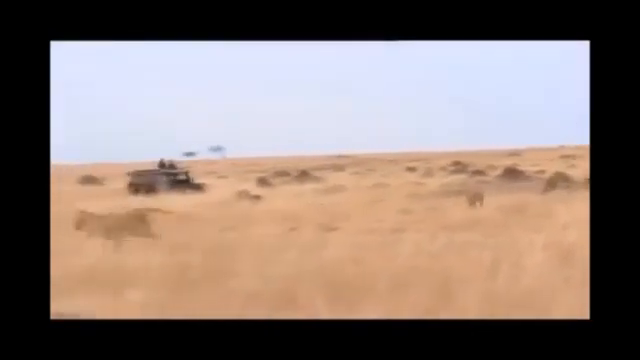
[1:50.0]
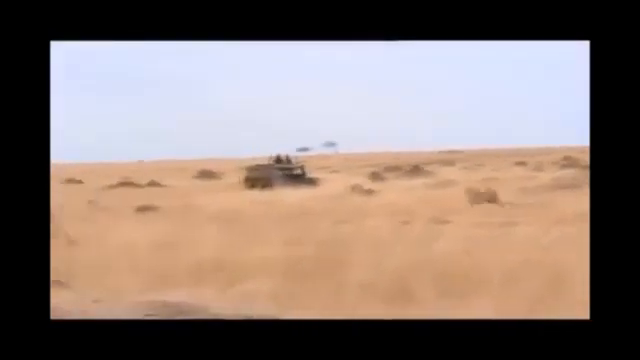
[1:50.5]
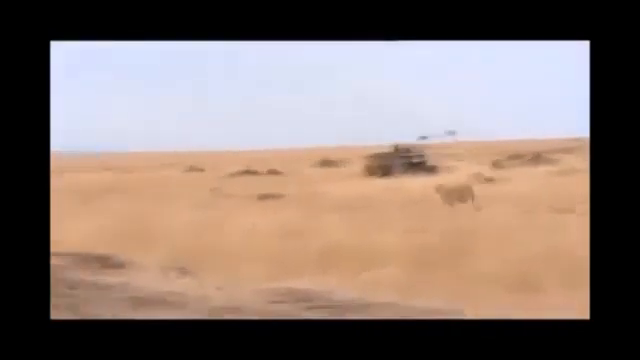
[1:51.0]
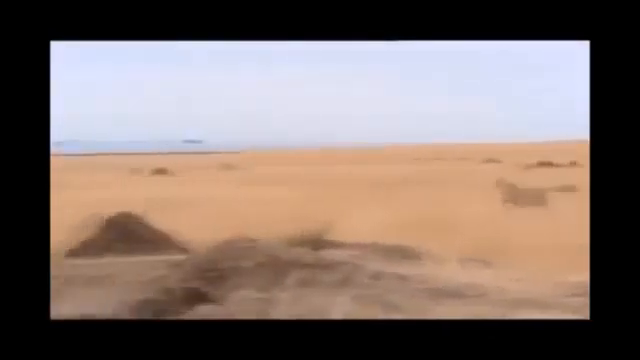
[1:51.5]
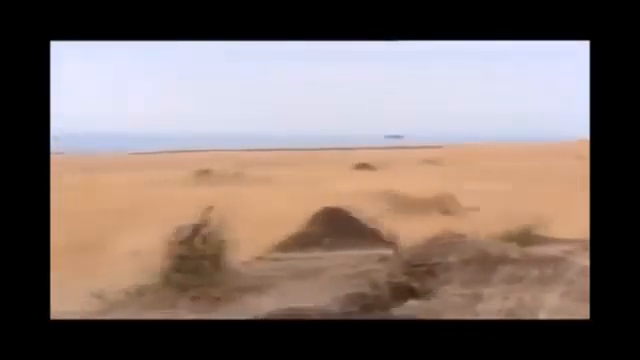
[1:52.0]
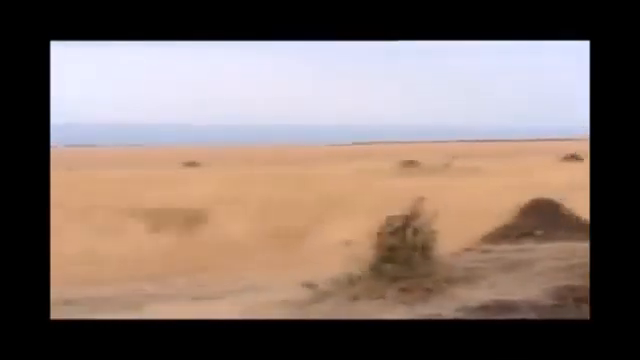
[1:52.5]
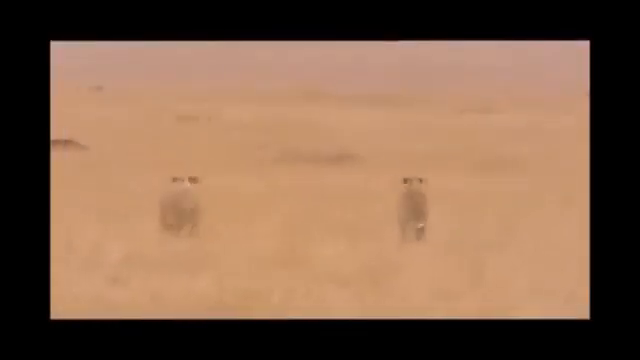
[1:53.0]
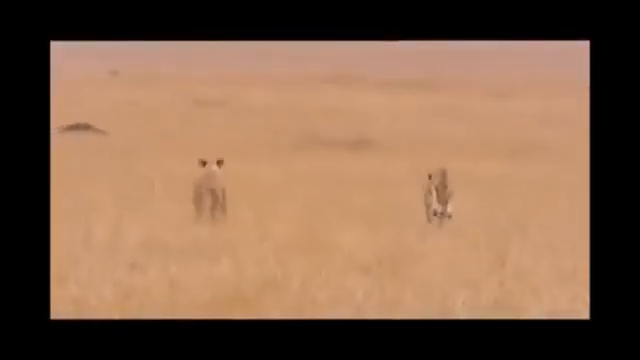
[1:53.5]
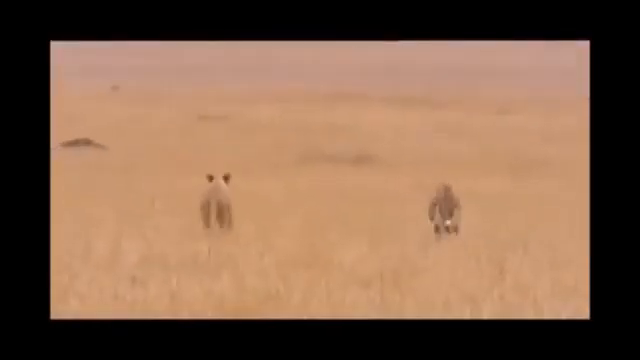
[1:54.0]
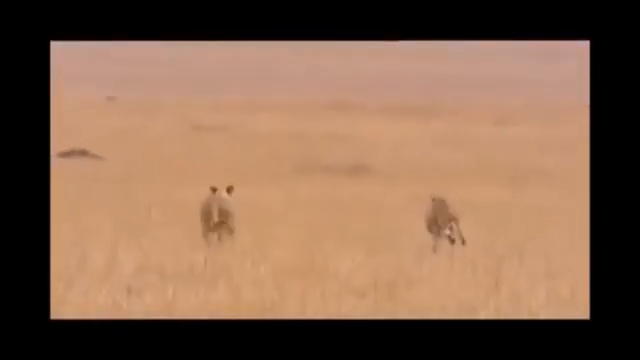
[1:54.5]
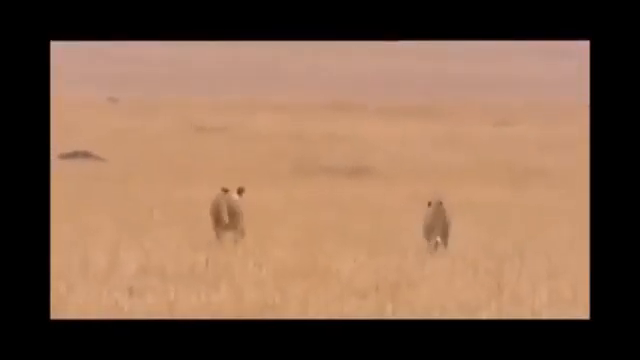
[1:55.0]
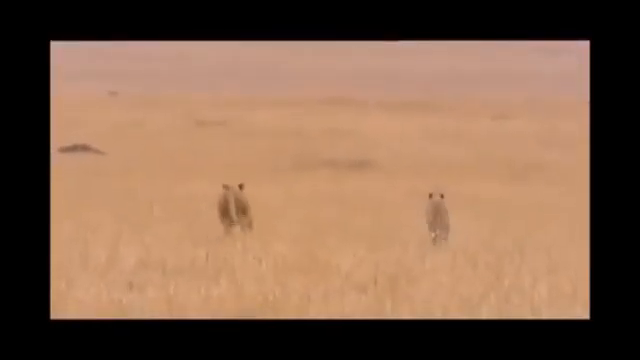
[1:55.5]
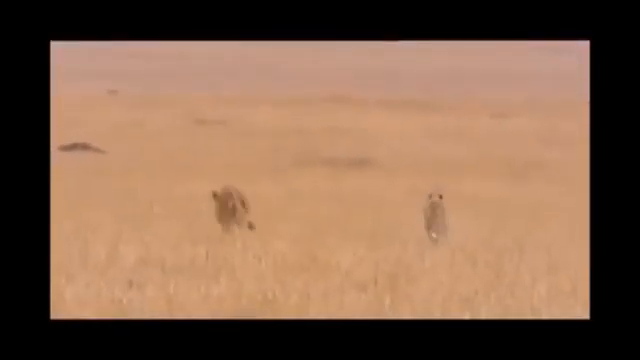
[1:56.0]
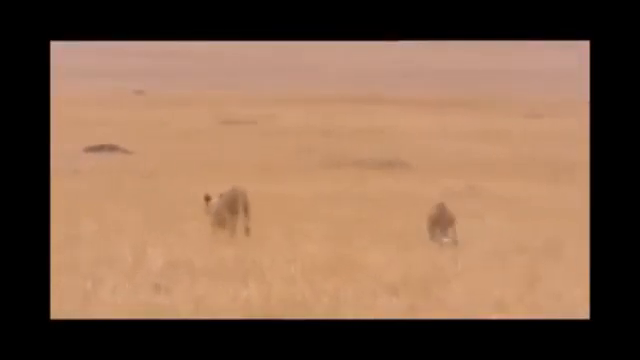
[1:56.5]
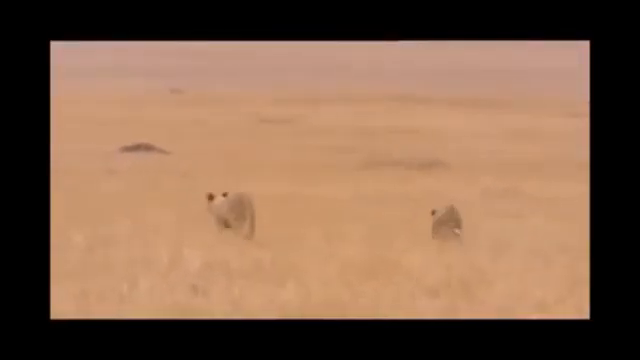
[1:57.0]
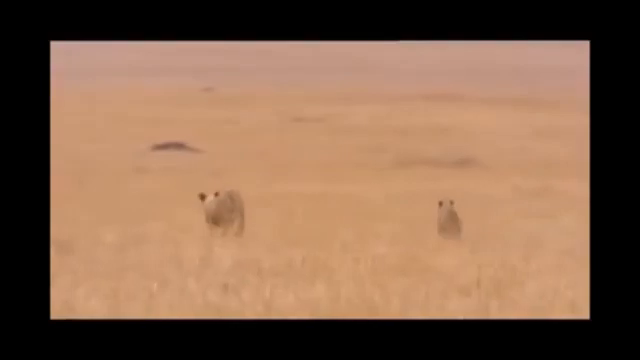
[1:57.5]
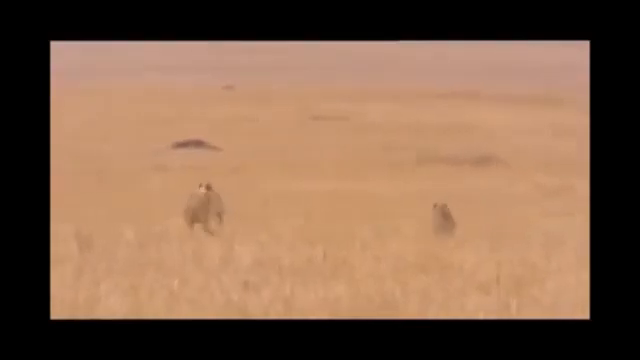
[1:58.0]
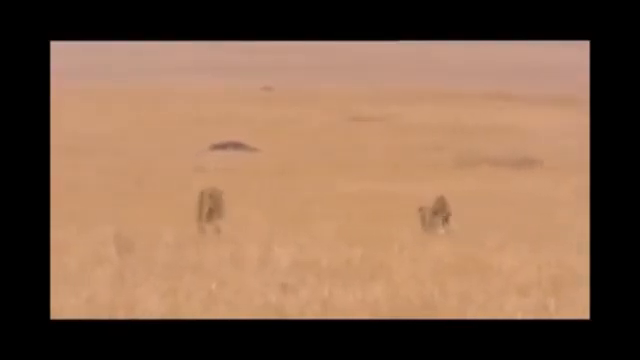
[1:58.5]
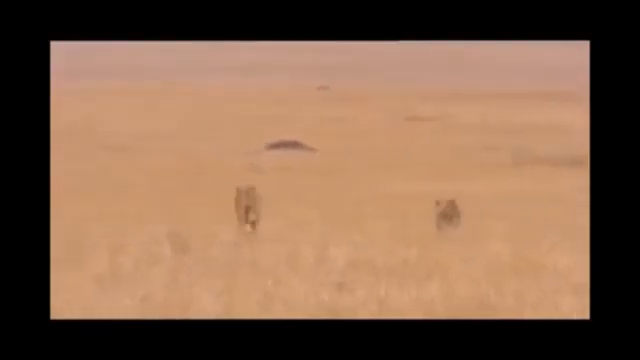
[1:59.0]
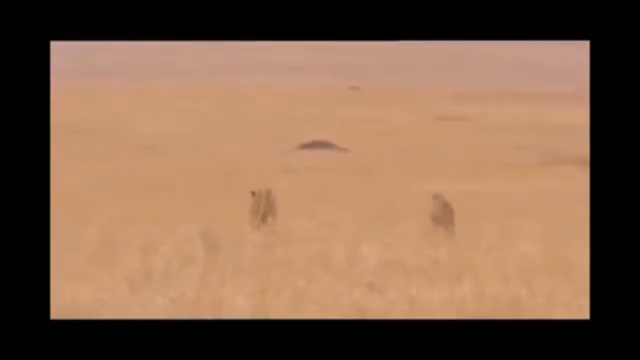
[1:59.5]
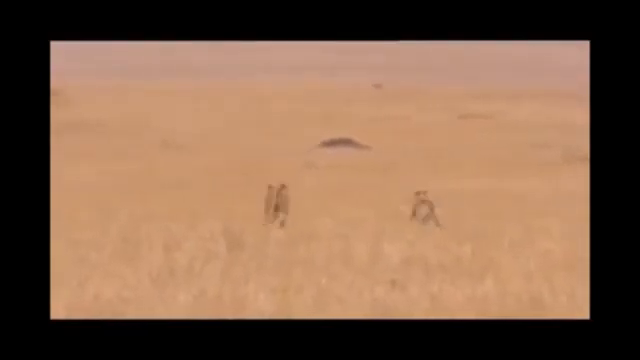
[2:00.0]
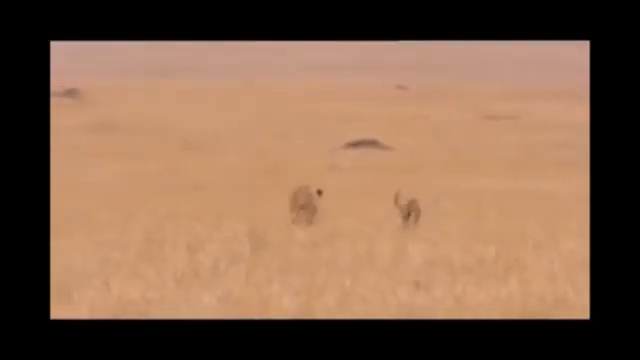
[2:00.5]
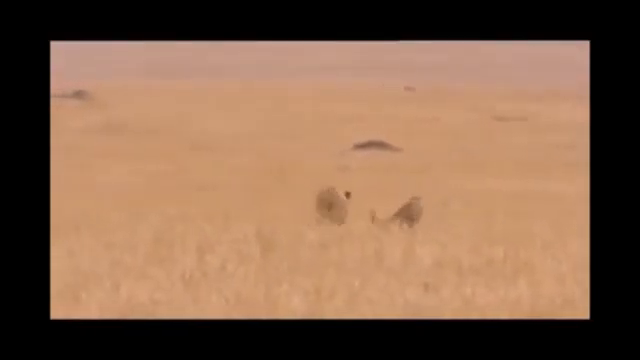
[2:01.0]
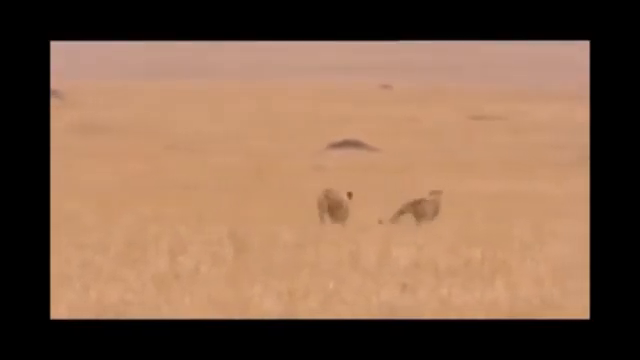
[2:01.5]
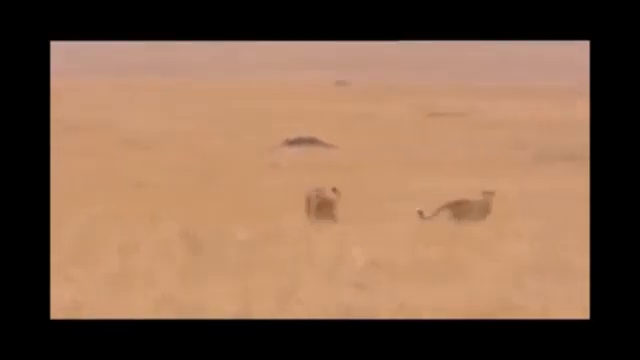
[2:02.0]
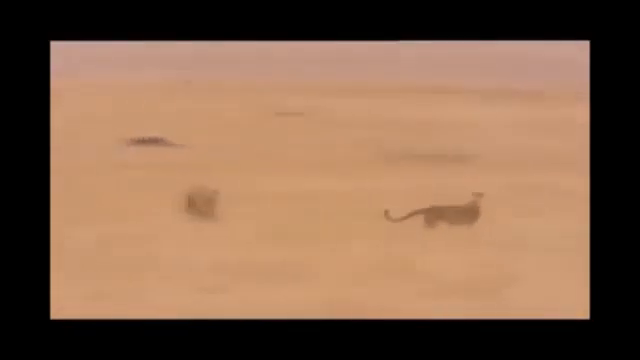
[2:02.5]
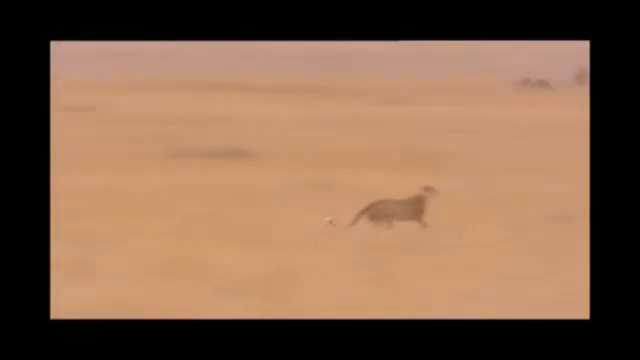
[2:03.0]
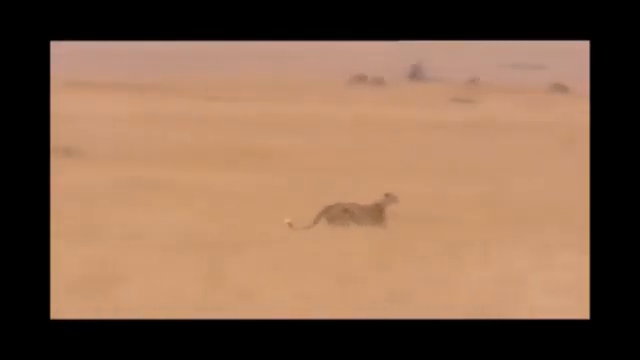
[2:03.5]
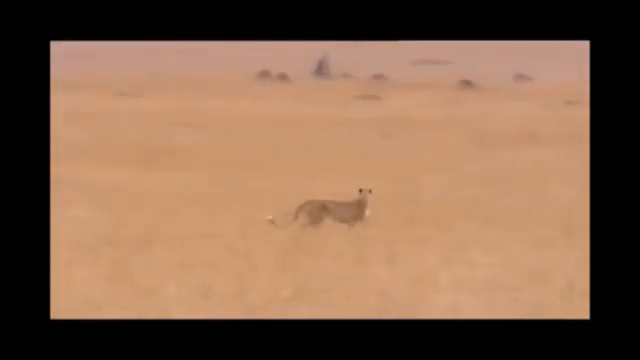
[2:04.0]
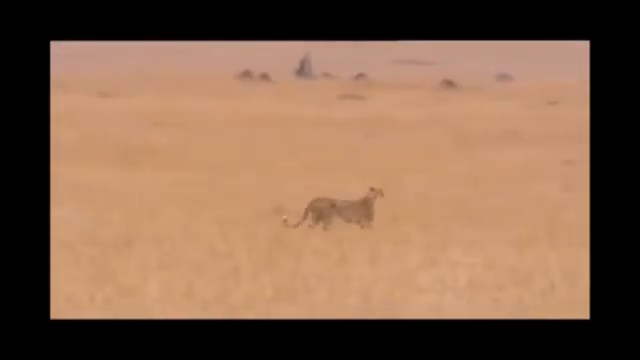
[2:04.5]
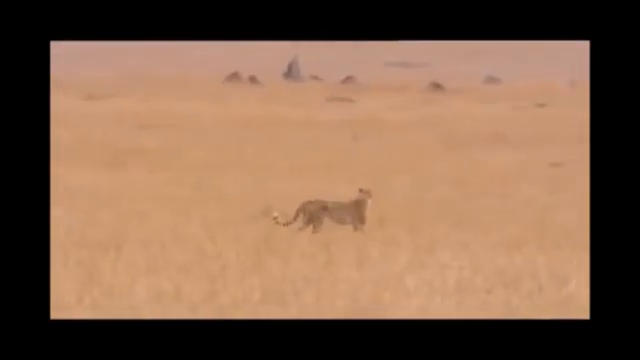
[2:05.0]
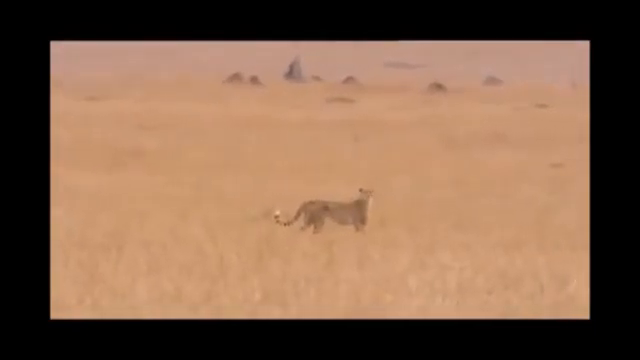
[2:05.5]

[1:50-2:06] Two lions, which look like lionesses, run very, very fast through a savannah, a brown, quite flat landscape of long grass. One lion seems to take the lead while the other follows behind, maybe three or four meters apart in width, the one behind looking larger because the front one is ahead by some distance; they charge through the long brown grass with the second trailing slightly behind. The footage, filmed from quite some distance away, seems to come from several angles: in one the lions run past the photographer, then either the photographer changes angle and films them from behind or there is a different camera. The leading lion then seems to veer to the left, and the camera focuses on that lion, so the second lion is lost from view.